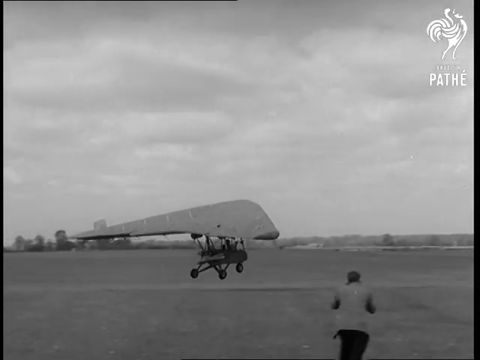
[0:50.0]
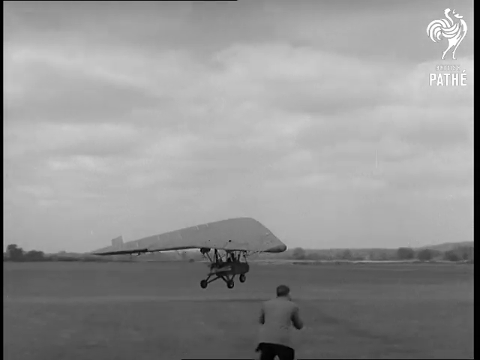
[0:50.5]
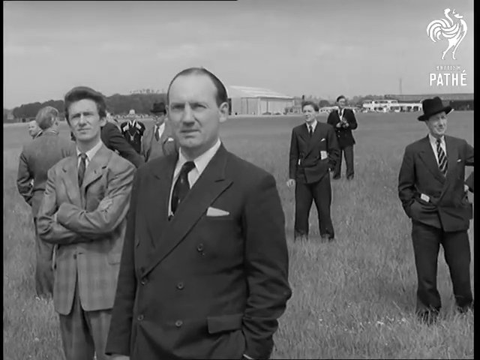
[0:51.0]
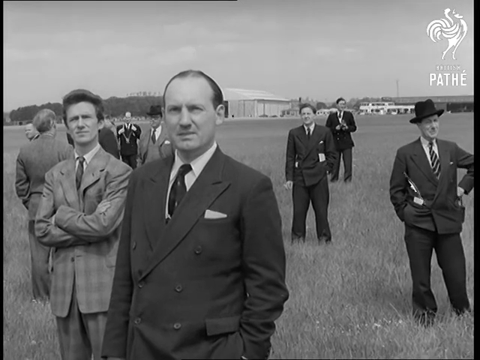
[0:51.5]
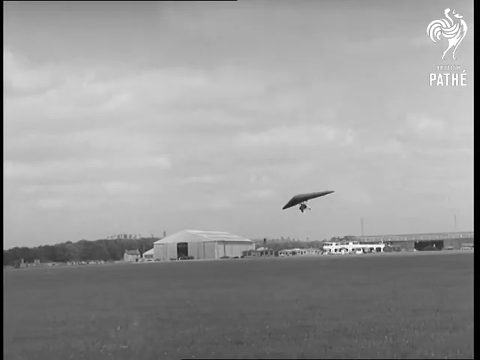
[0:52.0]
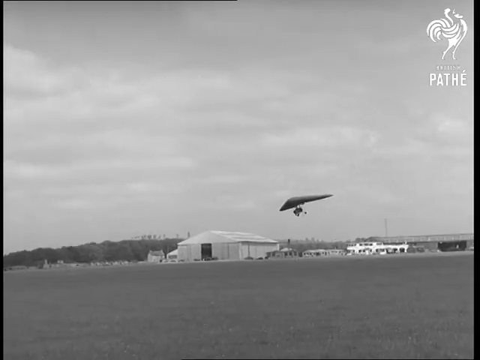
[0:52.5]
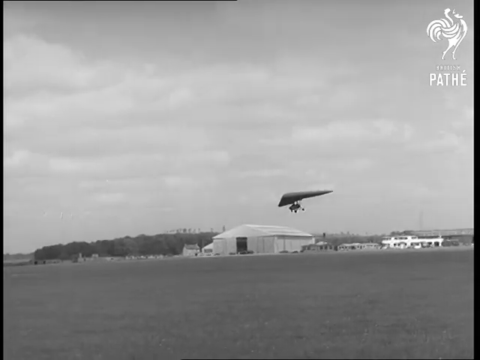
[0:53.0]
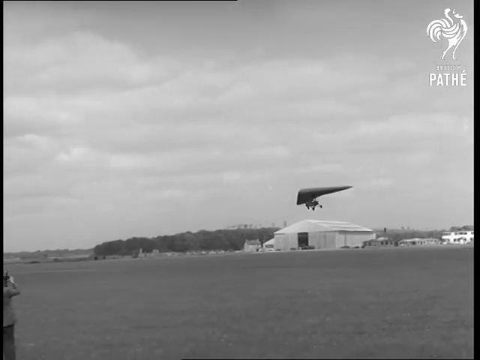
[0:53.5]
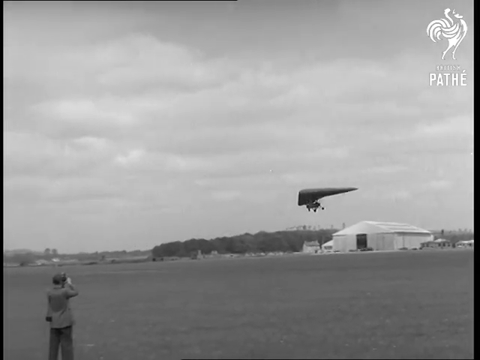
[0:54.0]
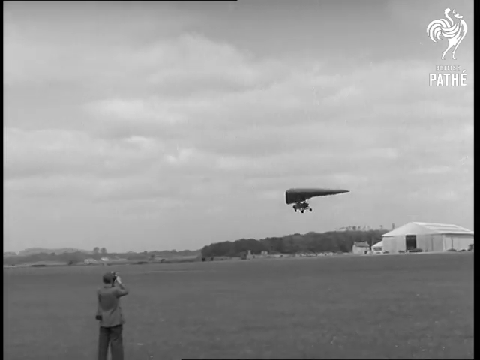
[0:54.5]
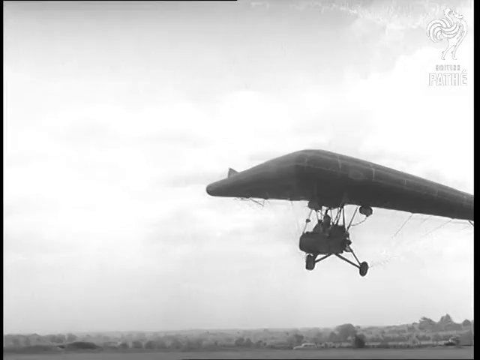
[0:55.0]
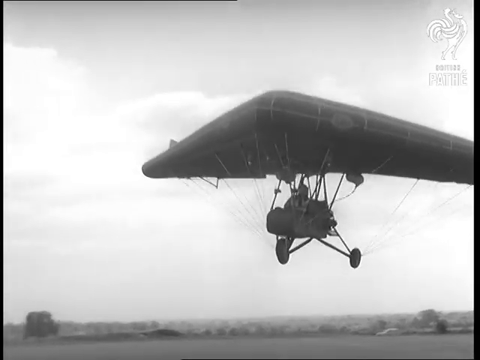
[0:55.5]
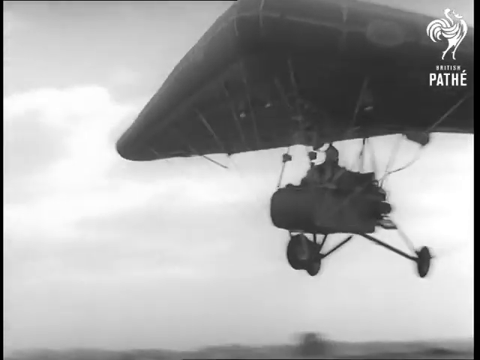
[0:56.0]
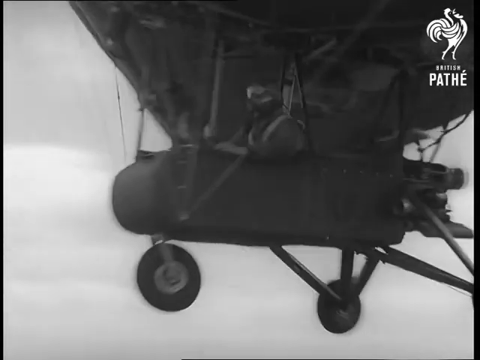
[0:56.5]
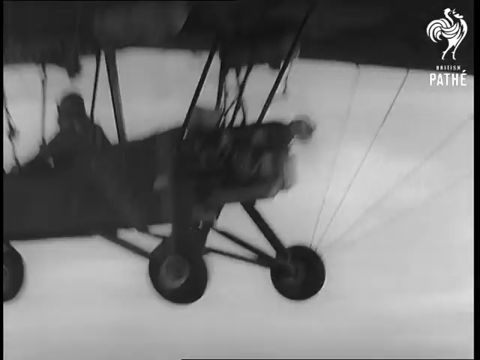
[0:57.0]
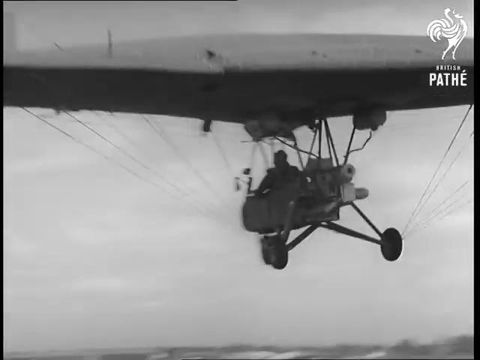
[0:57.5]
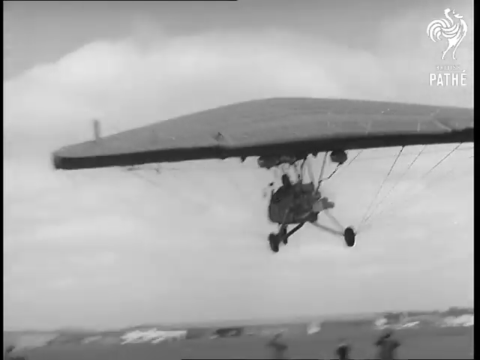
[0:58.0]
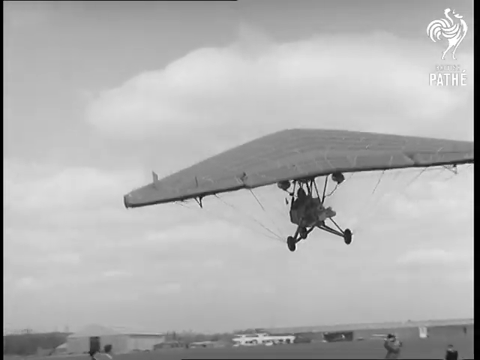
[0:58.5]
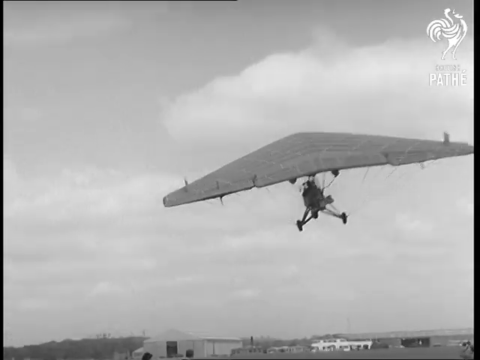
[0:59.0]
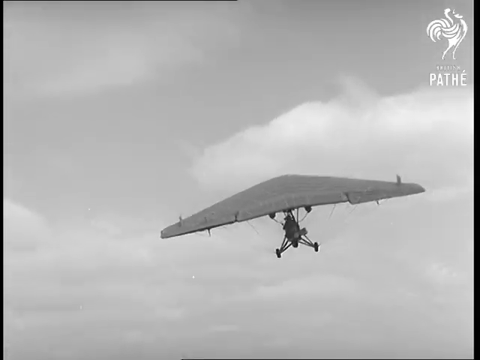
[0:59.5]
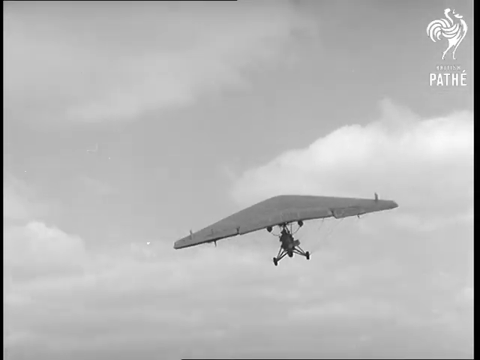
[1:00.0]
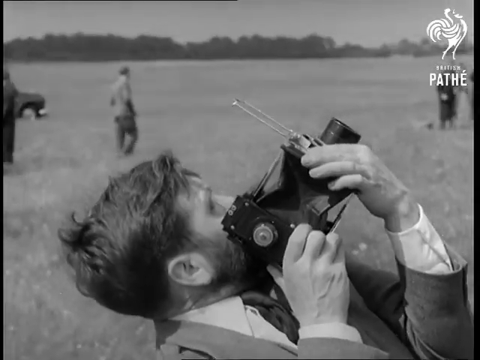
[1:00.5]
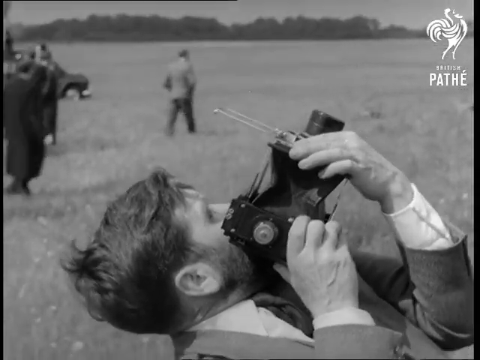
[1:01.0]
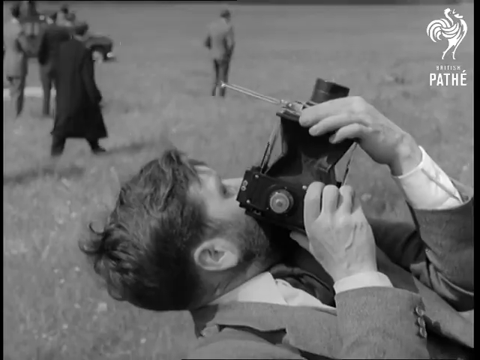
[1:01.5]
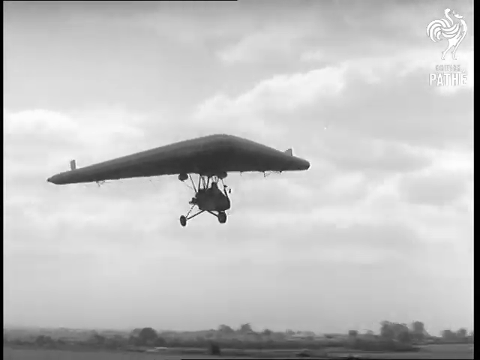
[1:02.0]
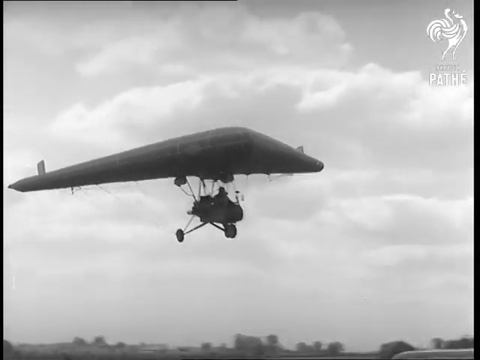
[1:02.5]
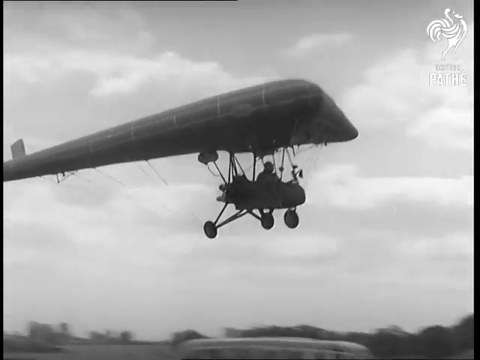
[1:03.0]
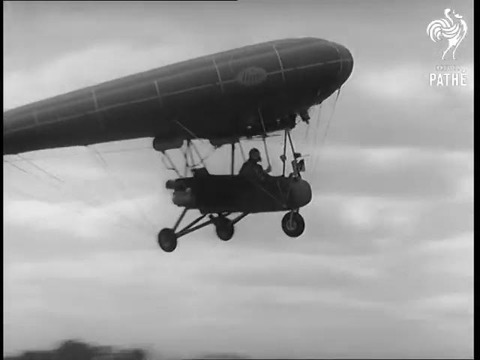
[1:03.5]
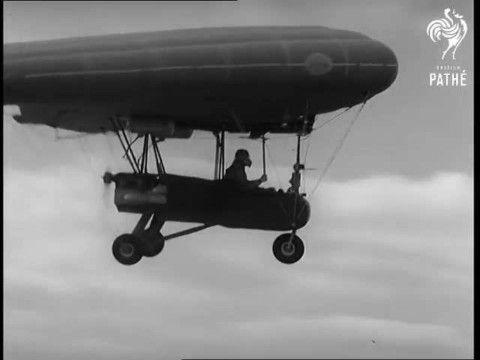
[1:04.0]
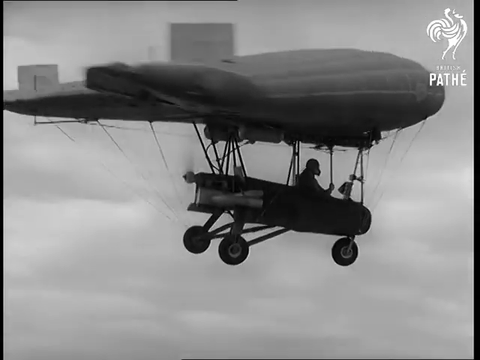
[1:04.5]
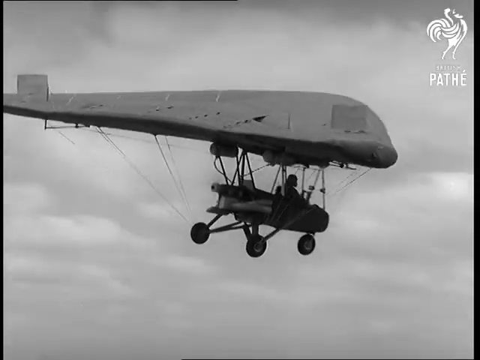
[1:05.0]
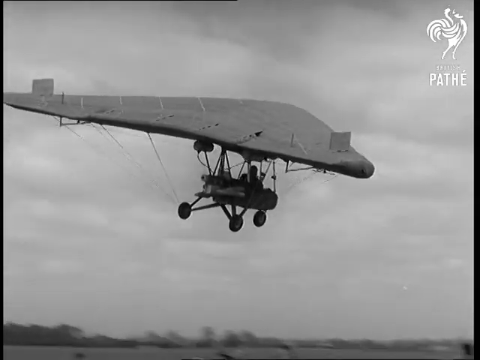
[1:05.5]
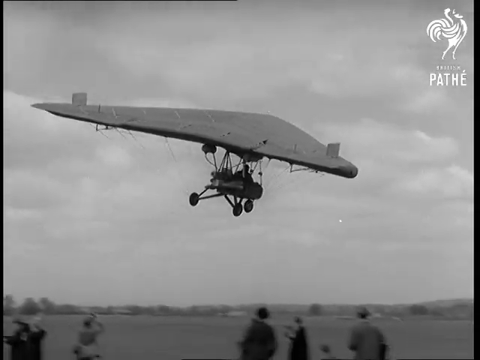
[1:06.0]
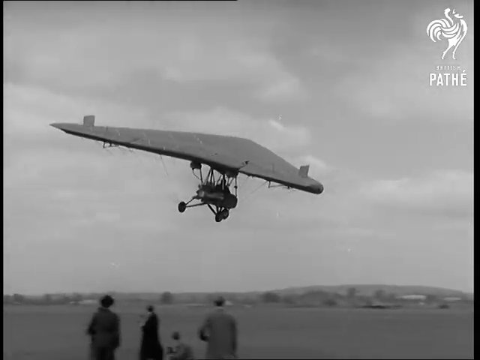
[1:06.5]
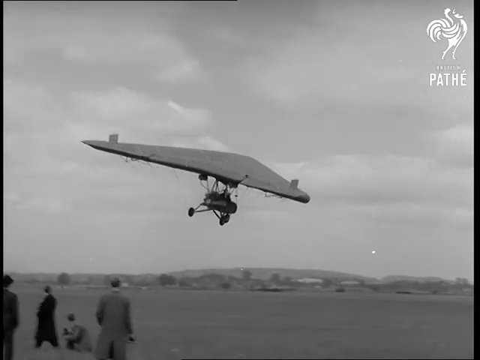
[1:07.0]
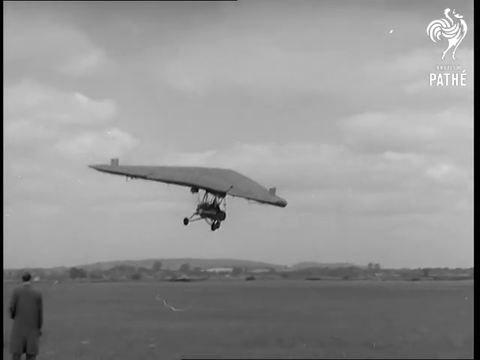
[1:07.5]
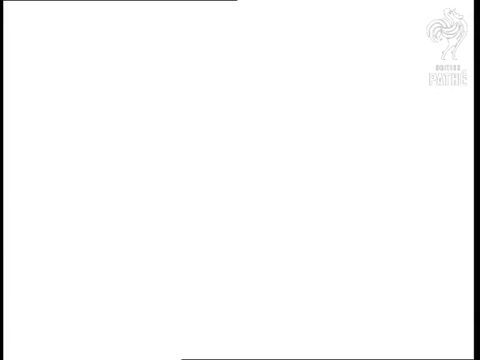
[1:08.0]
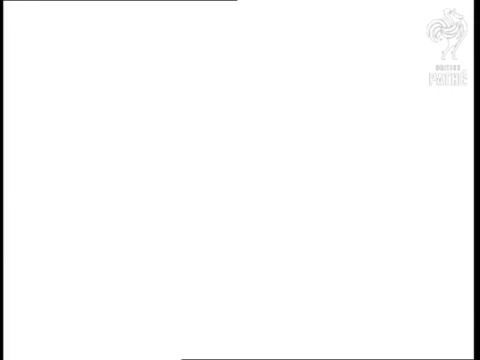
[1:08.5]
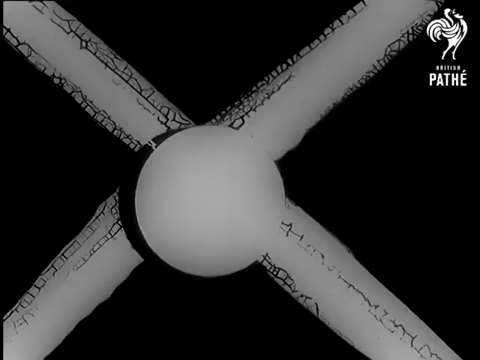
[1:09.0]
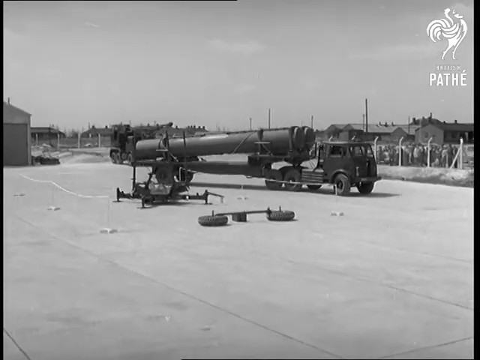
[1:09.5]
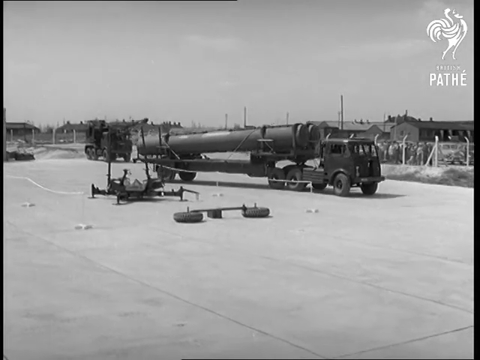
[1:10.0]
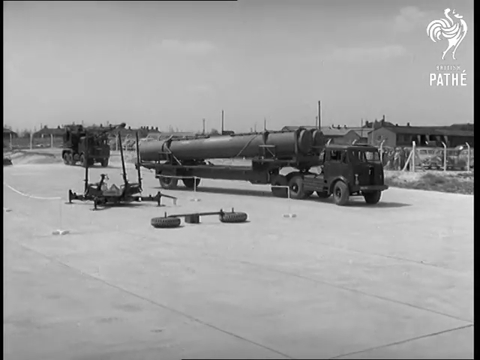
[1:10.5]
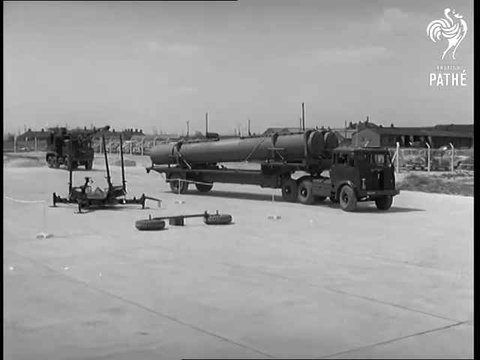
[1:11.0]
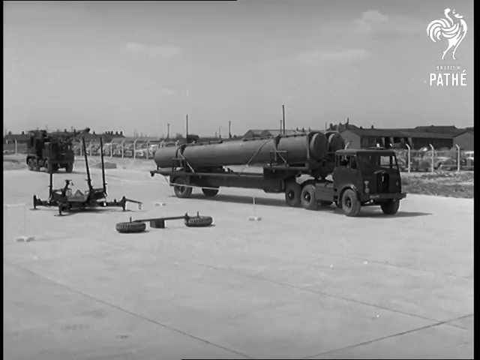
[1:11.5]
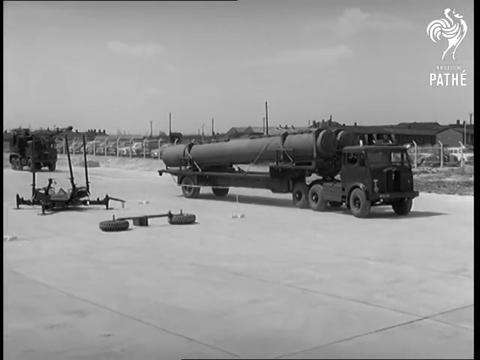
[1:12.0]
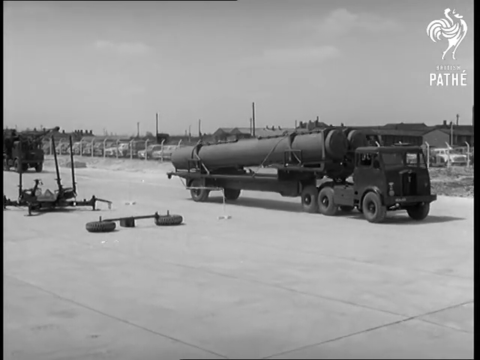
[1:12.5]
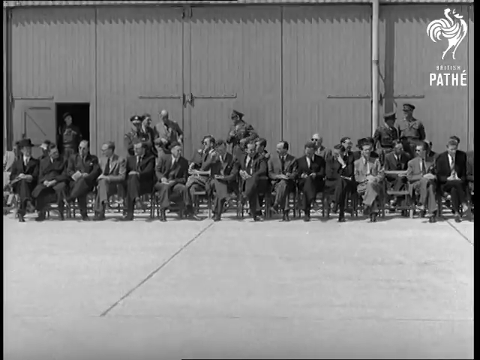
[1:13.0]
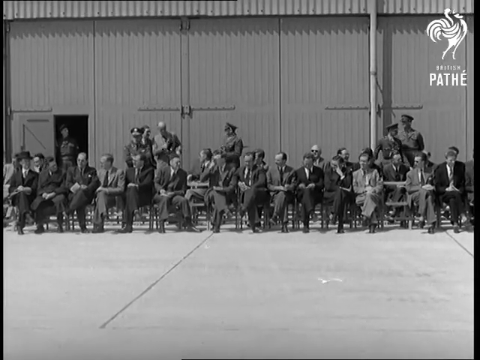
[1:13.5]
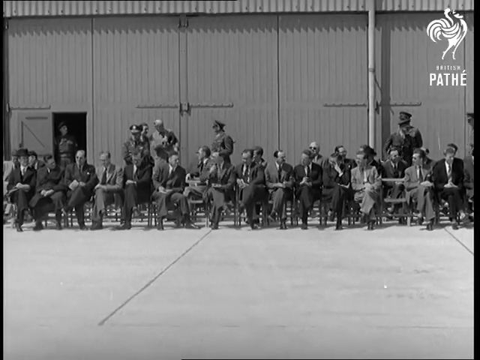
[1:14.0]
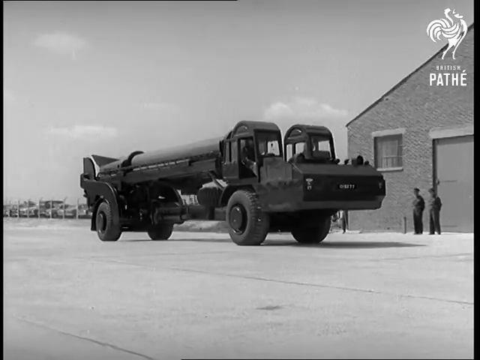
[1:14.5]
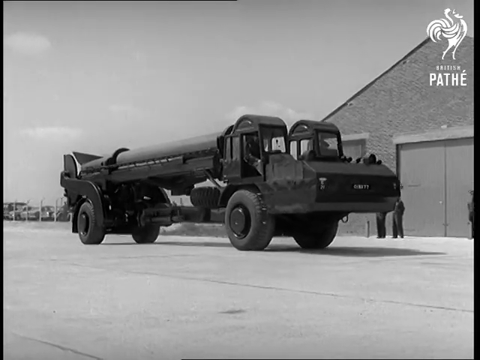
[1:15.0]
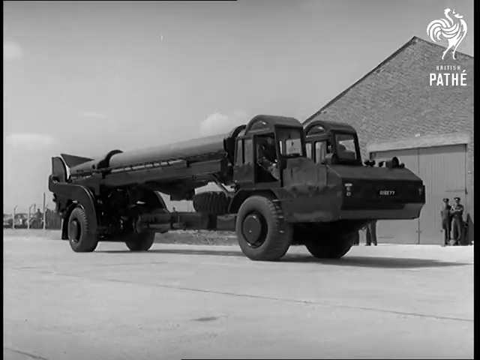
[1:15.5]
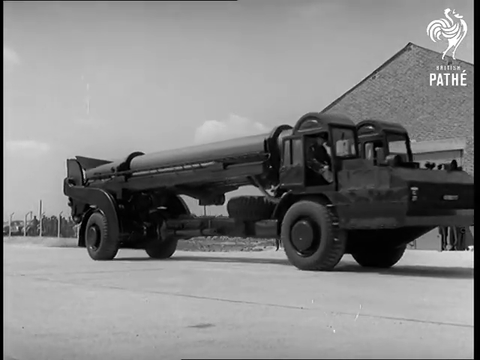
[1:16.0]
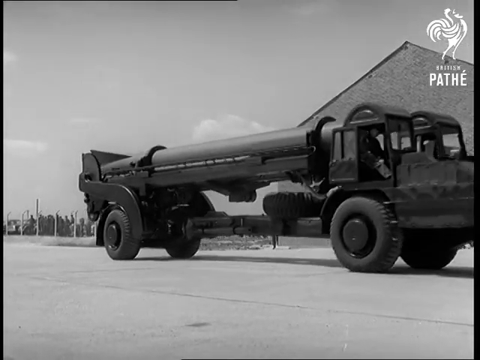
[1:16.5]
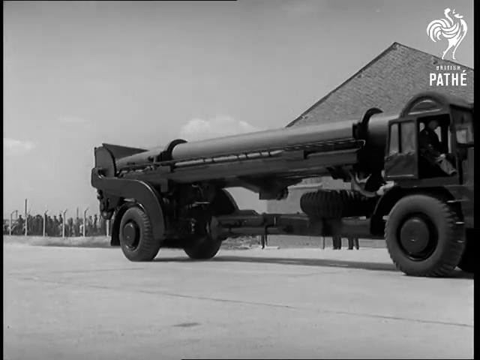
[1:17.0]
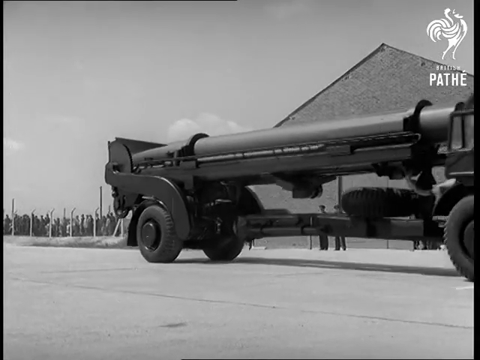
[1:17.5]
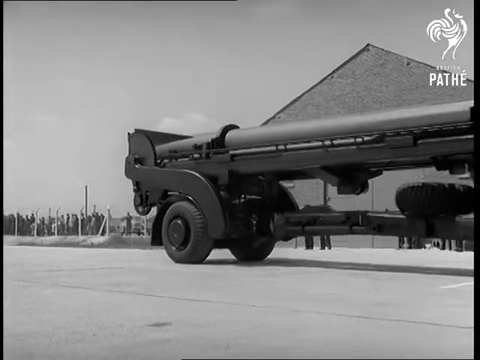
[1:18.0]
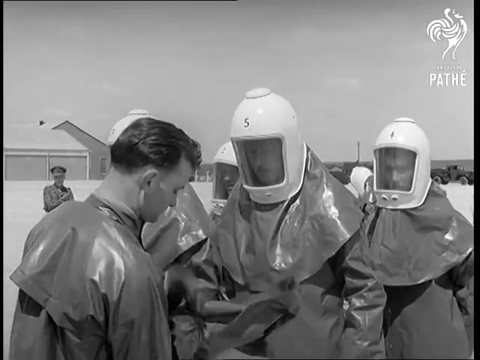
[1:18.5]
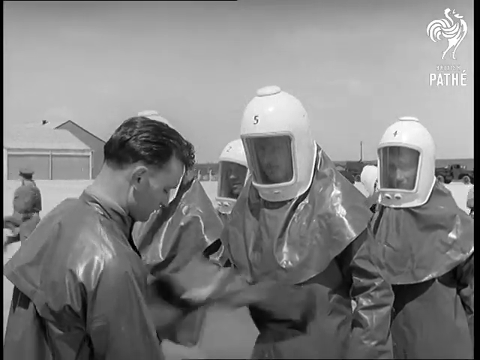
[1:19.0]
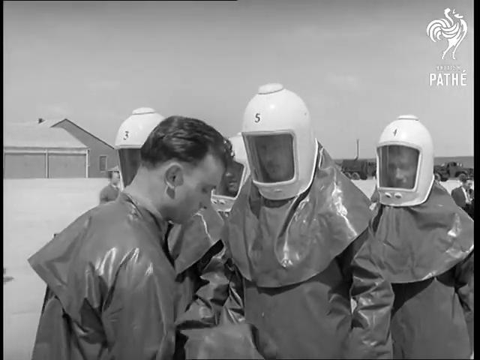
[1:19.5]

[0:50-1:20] The camera pans back to the observers standing in the field, most of them in business suits. The flying machine is shown in the air, with some kind of barn or hangar in the background, while men still stand on the field observing the flight. A close-up shows the vehicle, shaped like a hang glider. Among the observers on the ground, one man holds a vintage-style camera against his face, pointing it up into the air. More shots show the glider flying. The scene shifts to a truck carrying a long, large pipe. A row of men in business suits sit in folding chairs in front of a building with metal siding and doors; the roof of the building is not visible. The large vehicle is shown carrying some kind of long tubular object. Men wear protective gear with white helmets, their faces covered by a clear plastic shield, and maybe some kind of plastic or rubber draping around the bottom of the helmet covering their shoulders; there are at least five men dressed this way. The video returns to the flying glider, then to the men observing on the field, then to the same shot of the flying glider.